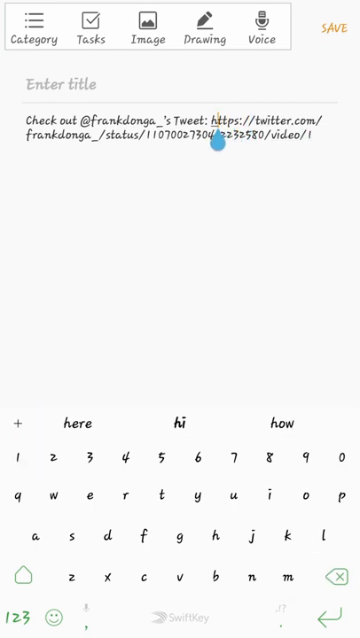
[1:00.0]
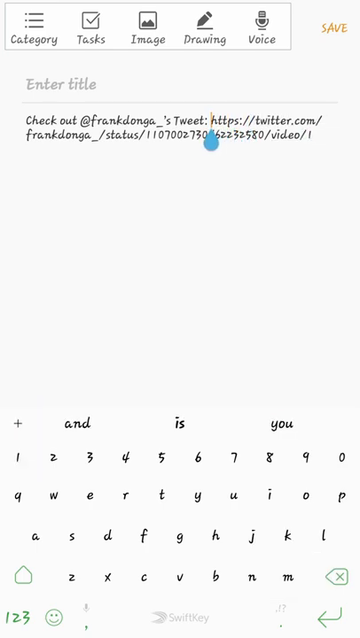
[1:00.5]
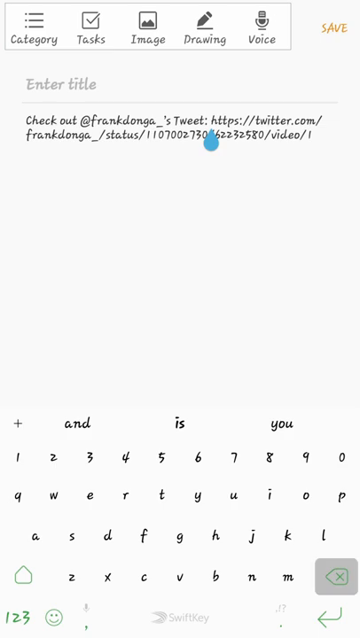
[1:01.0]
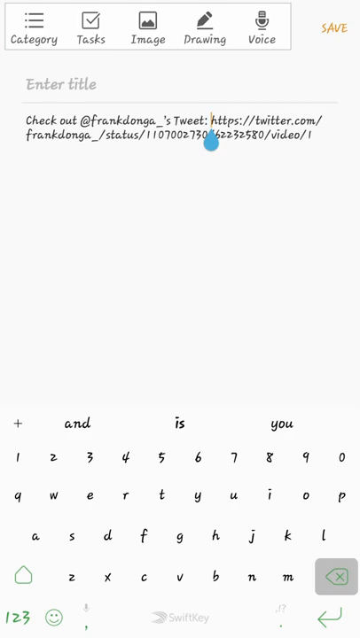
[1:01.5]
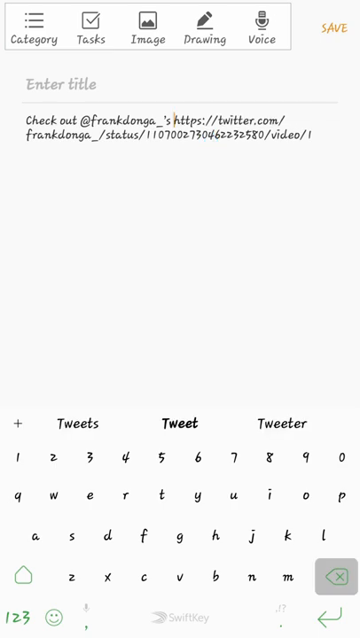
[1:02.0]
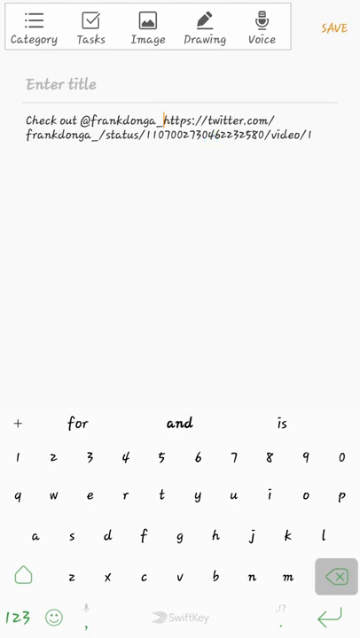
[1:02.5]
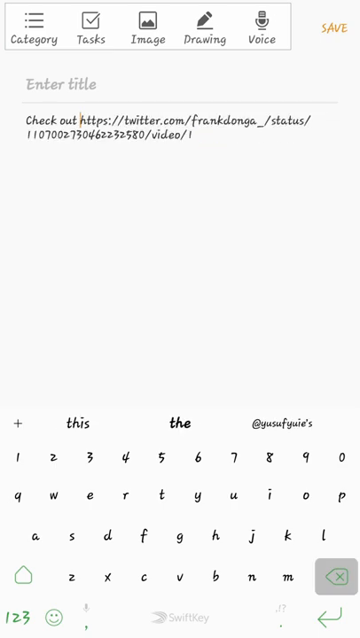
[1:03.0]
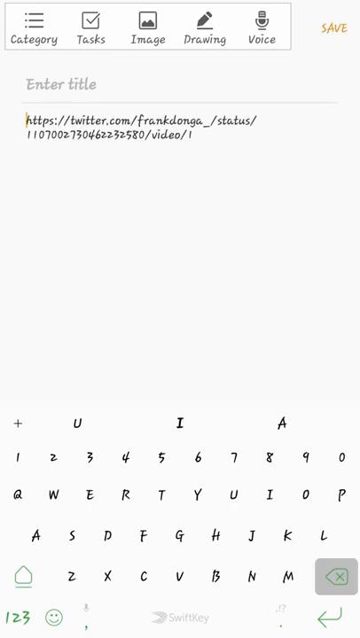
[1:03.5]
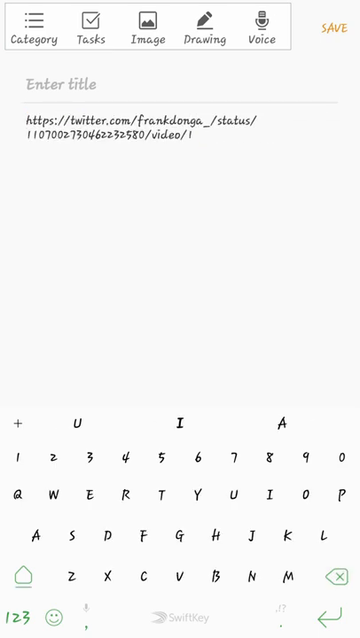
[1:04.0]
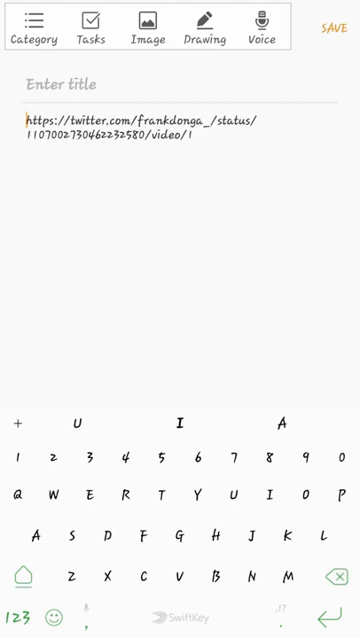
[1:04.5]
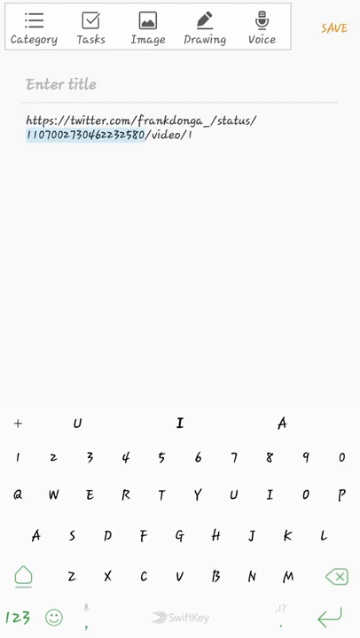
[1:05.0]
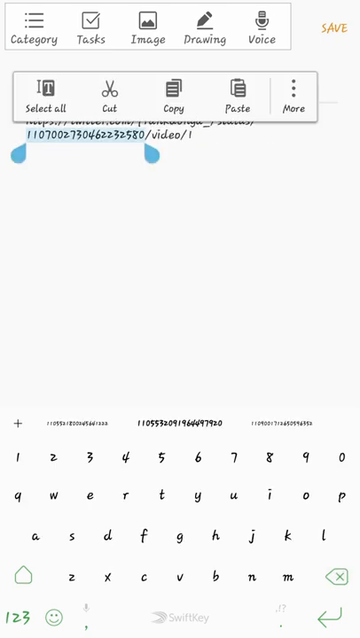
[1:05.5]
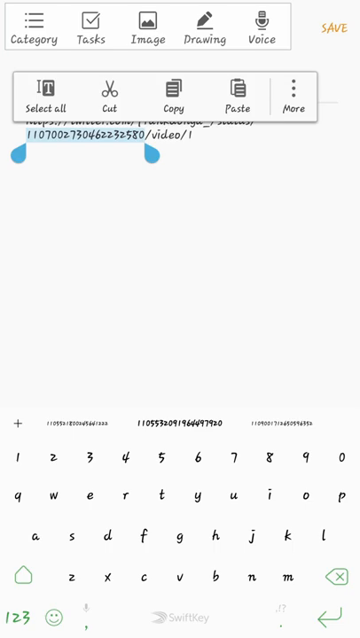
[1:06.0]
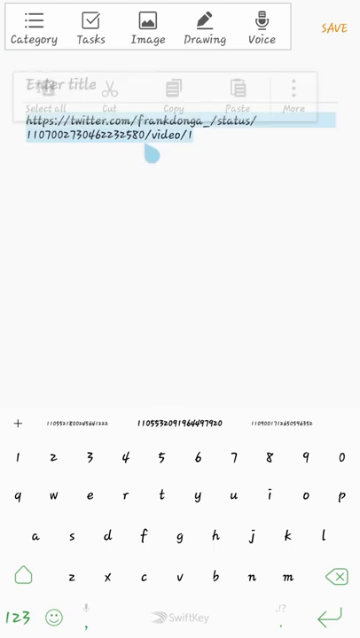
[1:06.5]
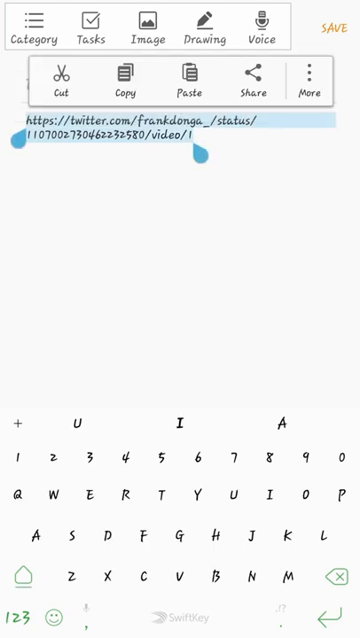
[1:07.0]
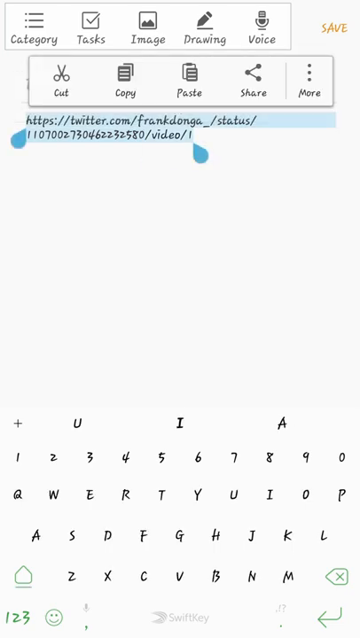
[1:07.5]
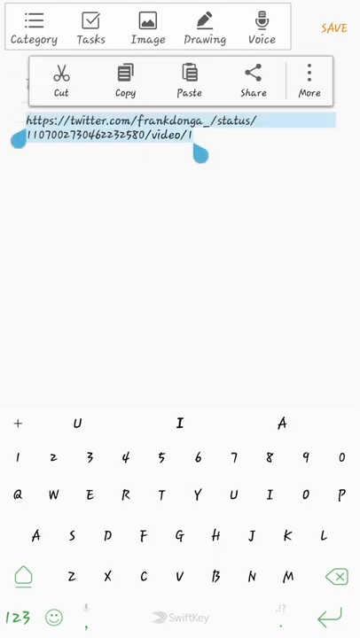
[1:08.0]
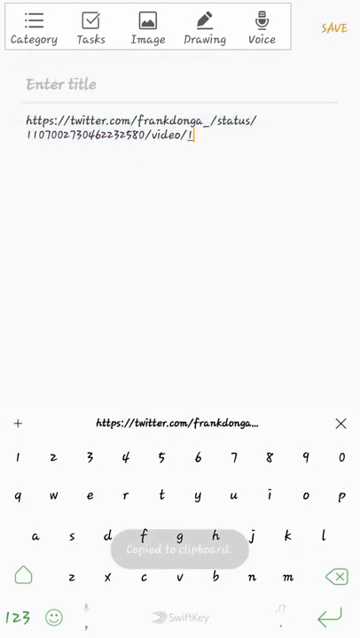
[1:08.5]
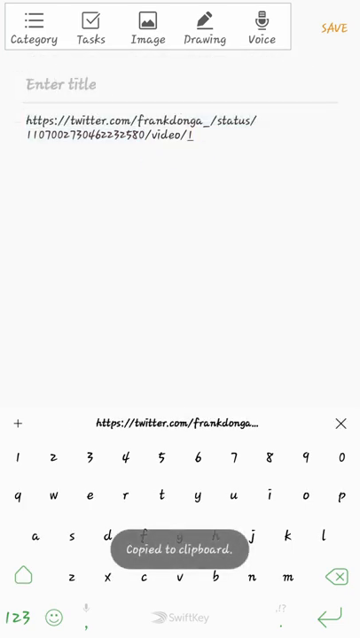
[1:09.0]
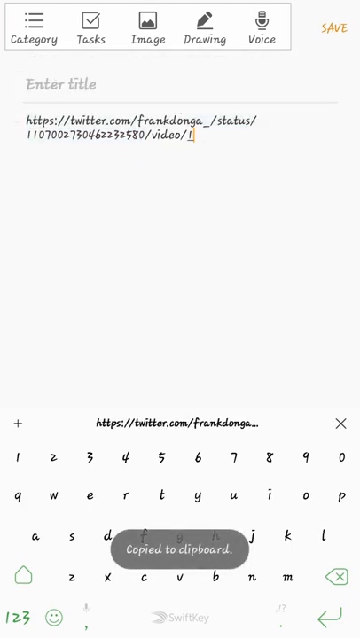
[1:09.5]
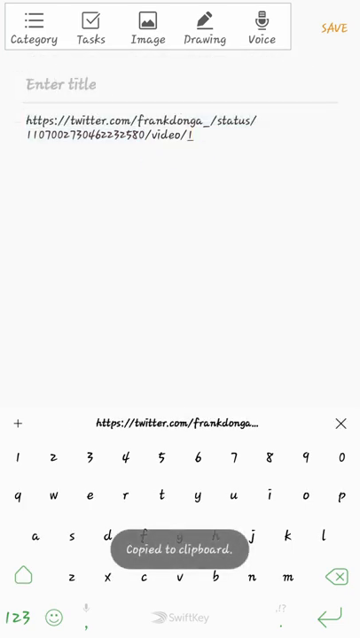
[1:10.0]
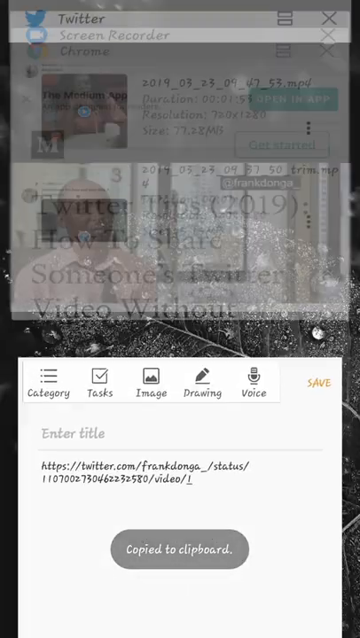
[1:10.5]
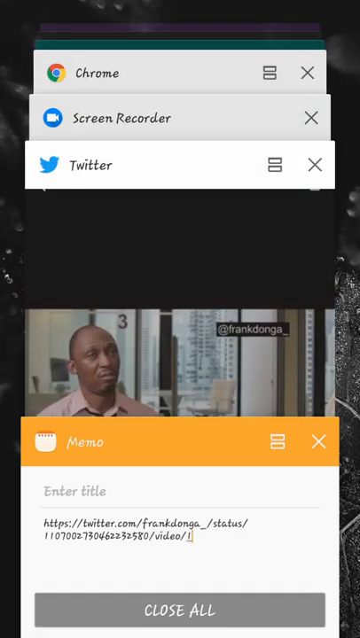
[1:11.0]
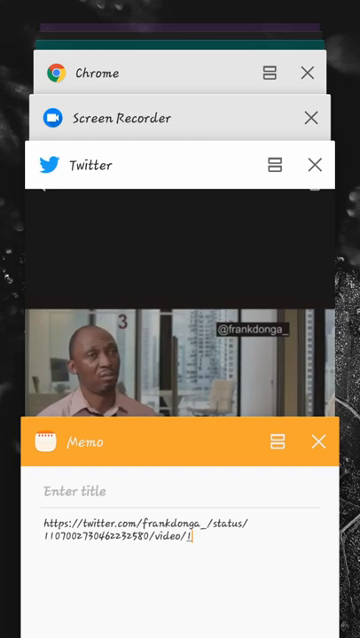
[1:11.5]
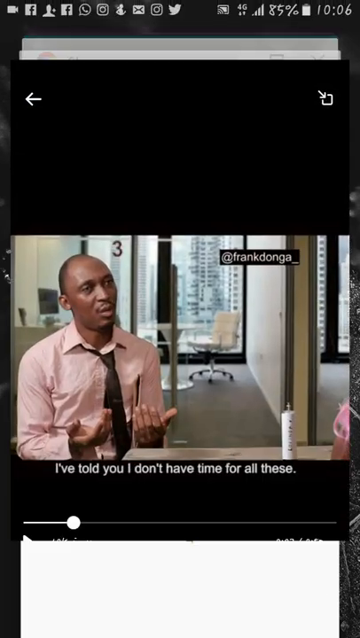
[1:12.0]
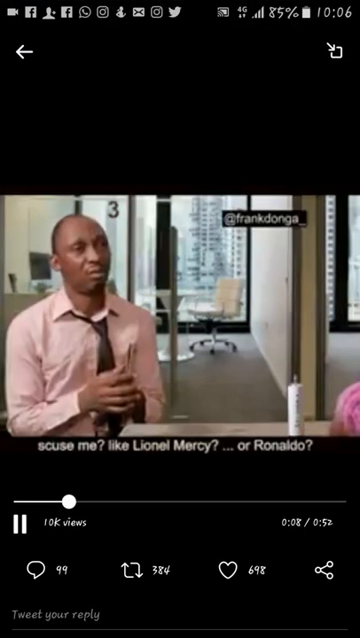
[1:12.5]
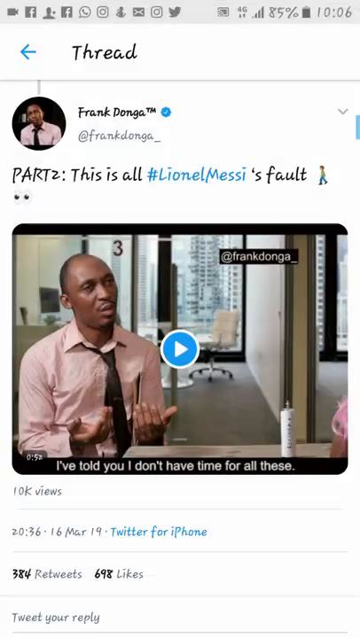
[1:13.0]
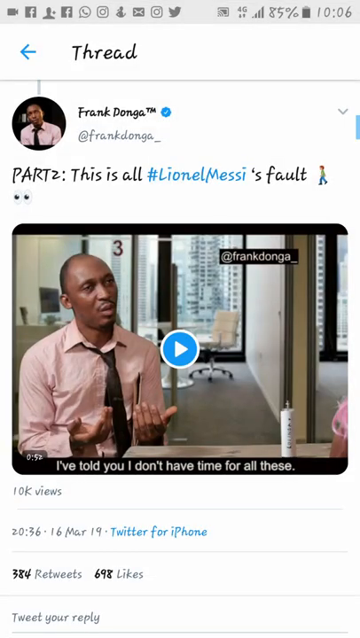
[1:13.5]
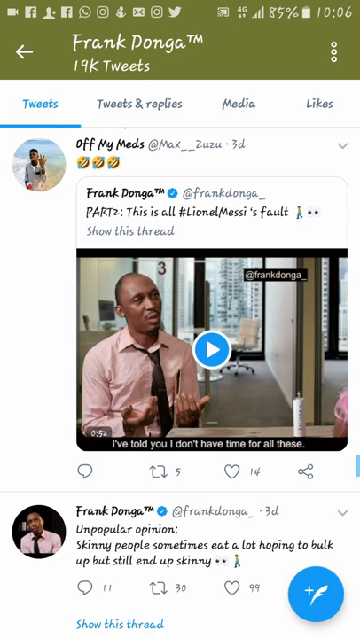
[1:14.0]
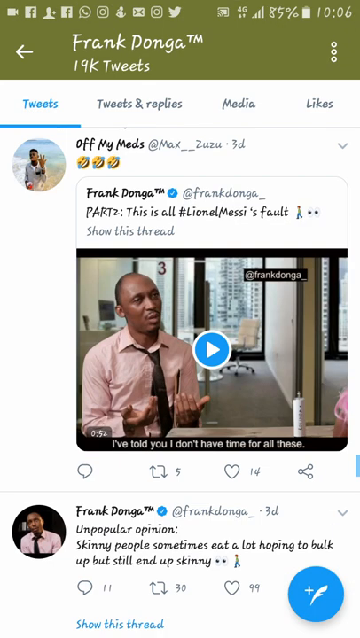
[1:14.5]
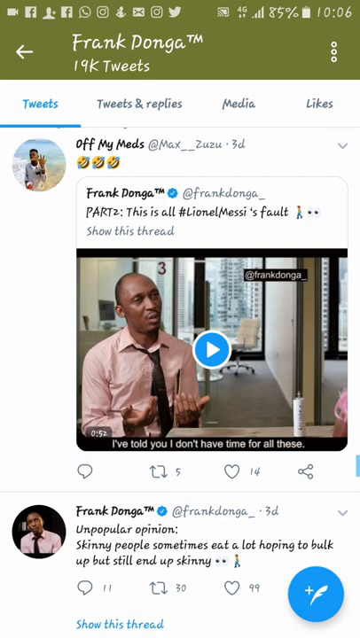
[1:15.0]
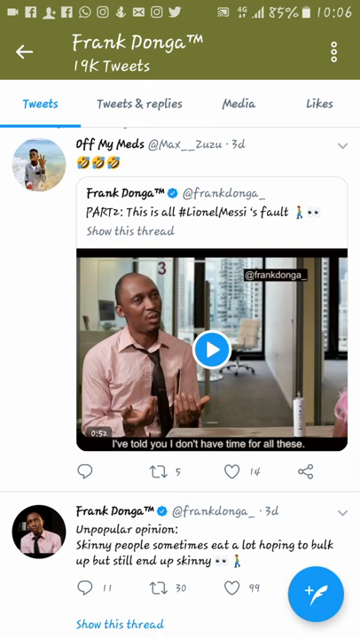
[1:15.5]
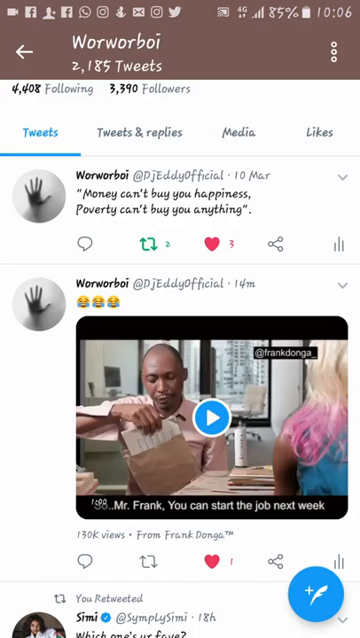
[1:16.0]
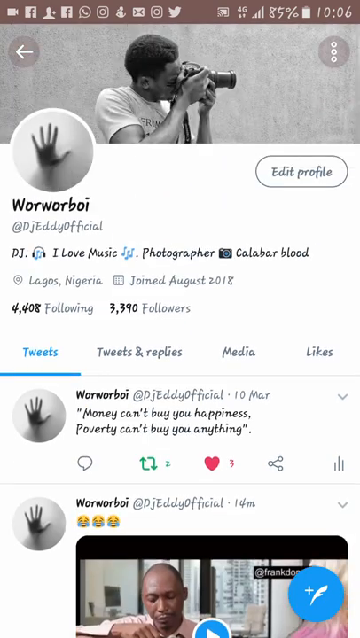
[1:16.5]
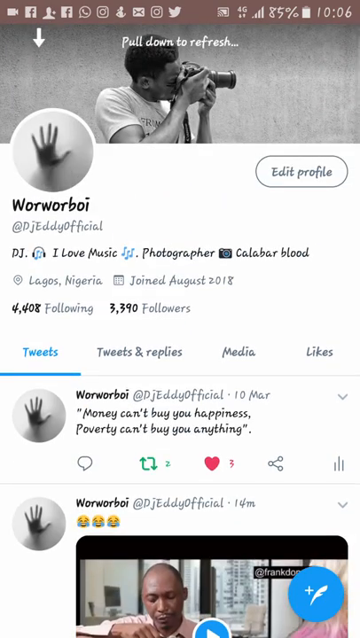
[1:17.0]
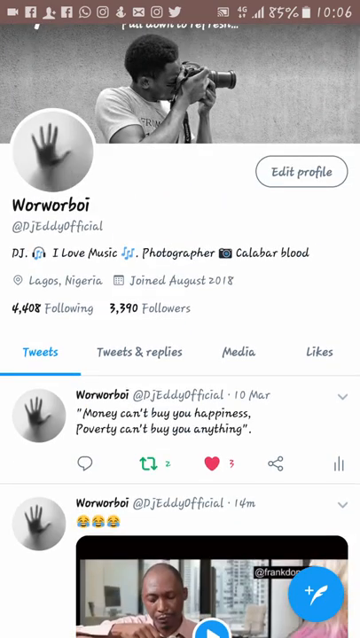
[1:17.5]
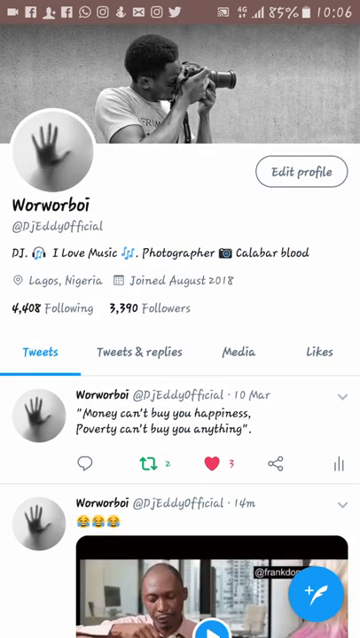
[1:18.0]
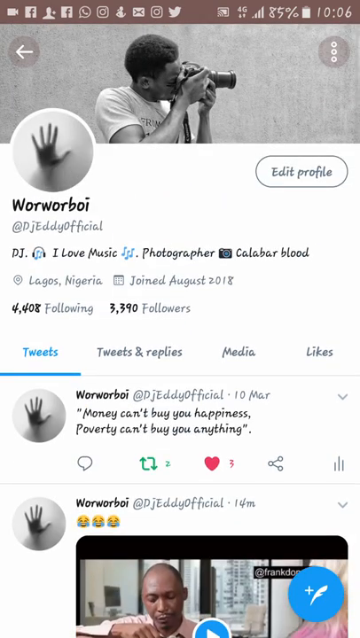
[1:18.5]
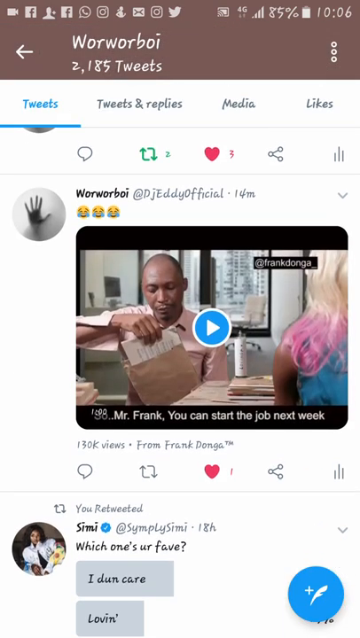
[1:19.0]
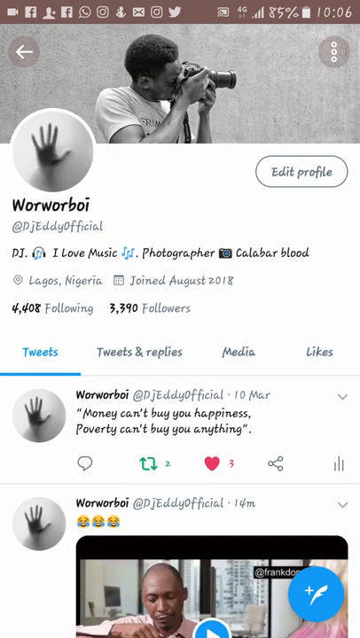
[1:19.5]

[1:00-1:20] He goes into Frank's posts and chooses a video, showing where to find the links, pasting links and editing them so the video can be retweeted. After copying the link, he goes to another tab and adds the word "video" with a stroke and a one in front of it. He then copies everything he has typed along with what he added and goes back to Twitter.